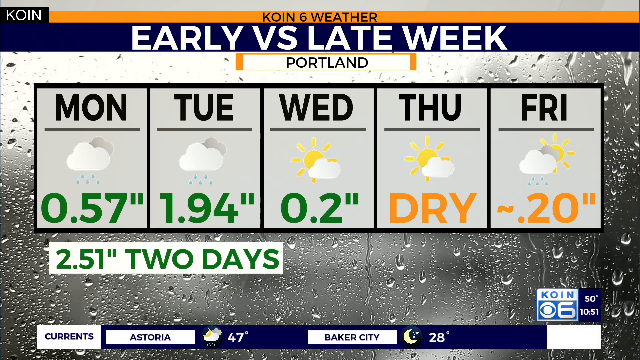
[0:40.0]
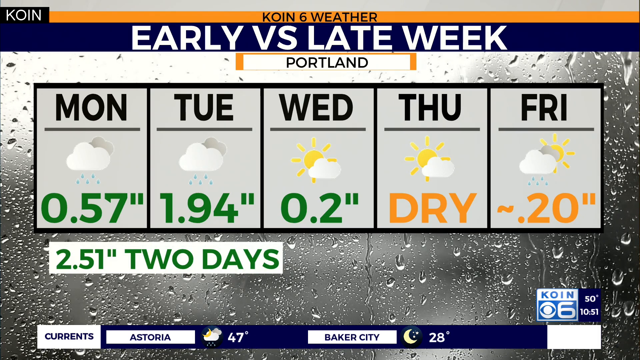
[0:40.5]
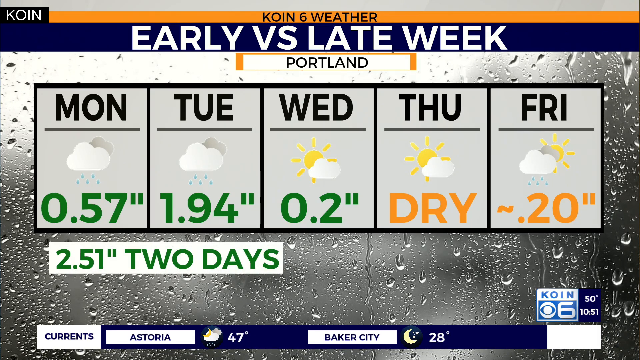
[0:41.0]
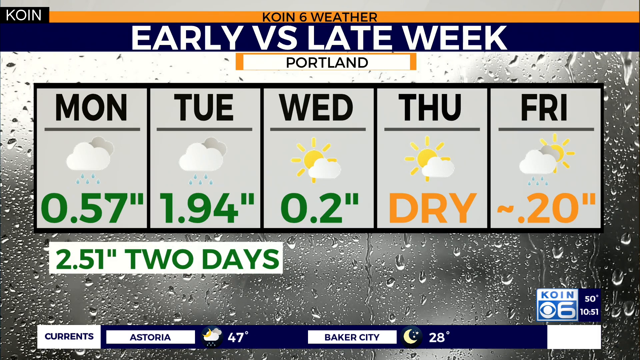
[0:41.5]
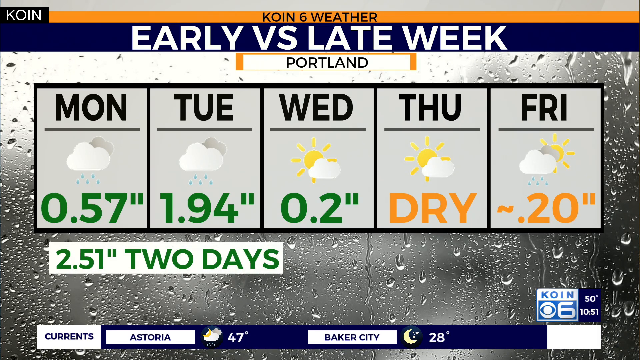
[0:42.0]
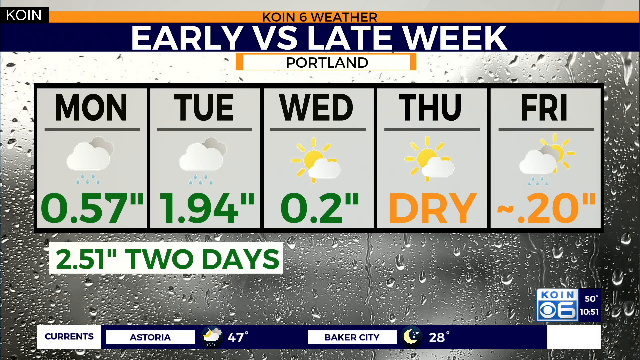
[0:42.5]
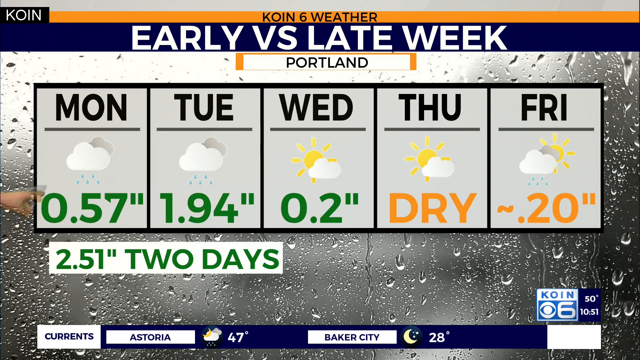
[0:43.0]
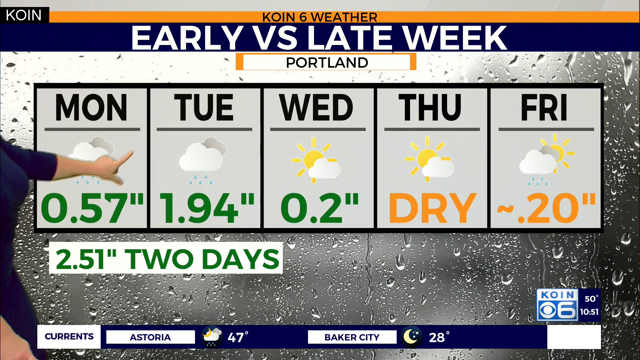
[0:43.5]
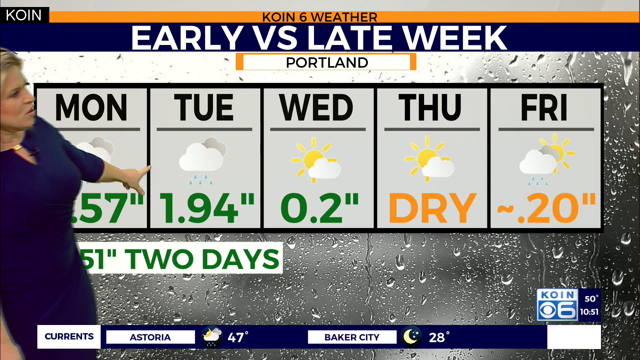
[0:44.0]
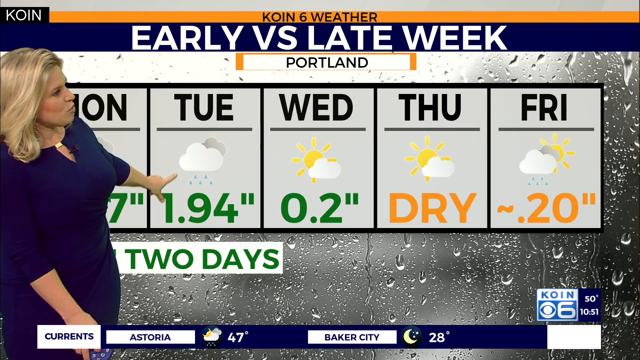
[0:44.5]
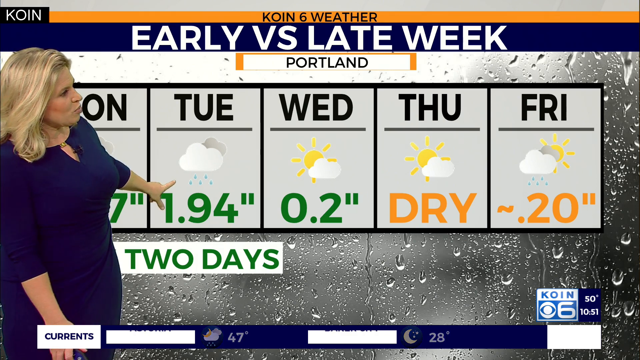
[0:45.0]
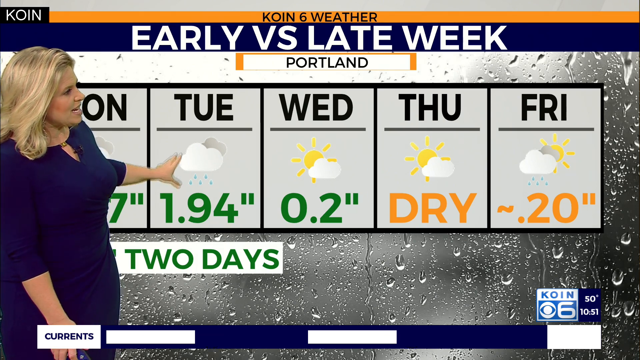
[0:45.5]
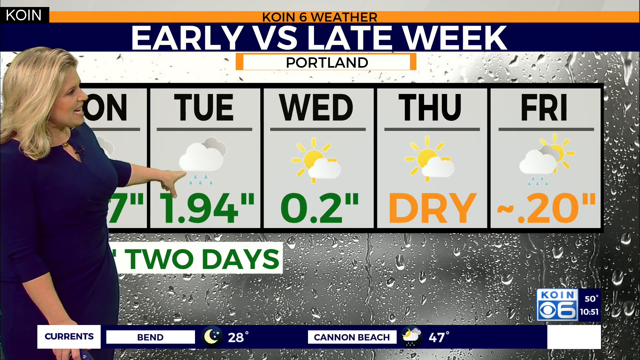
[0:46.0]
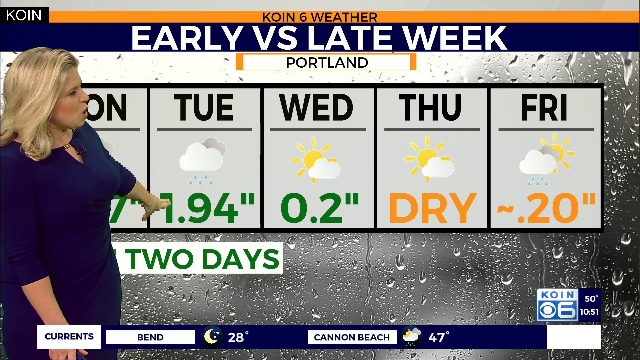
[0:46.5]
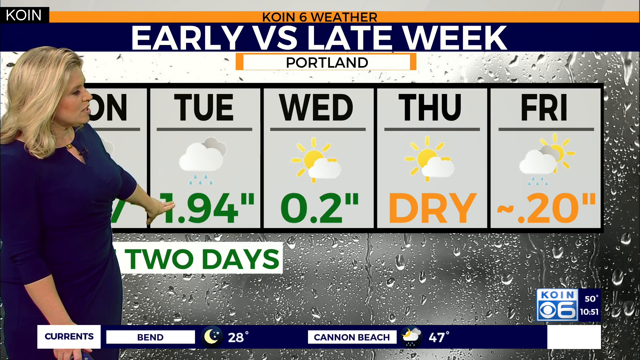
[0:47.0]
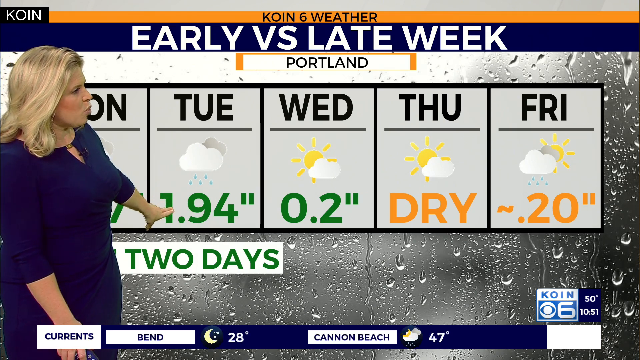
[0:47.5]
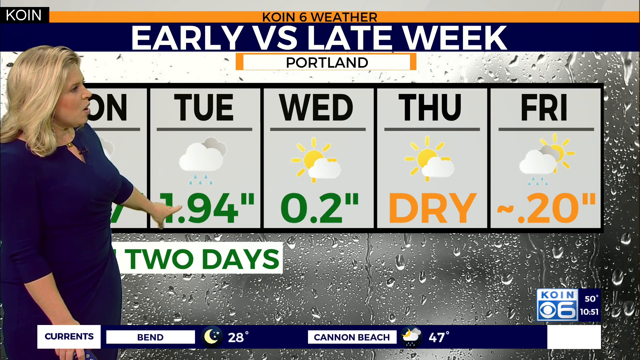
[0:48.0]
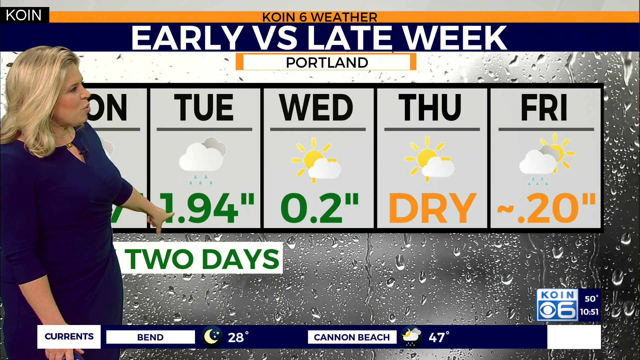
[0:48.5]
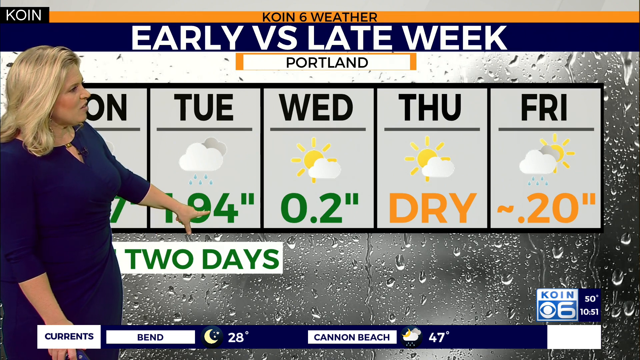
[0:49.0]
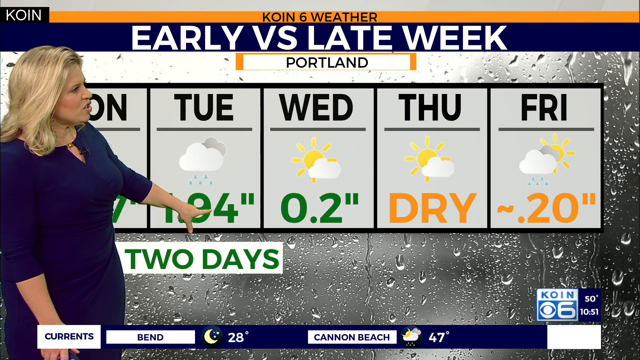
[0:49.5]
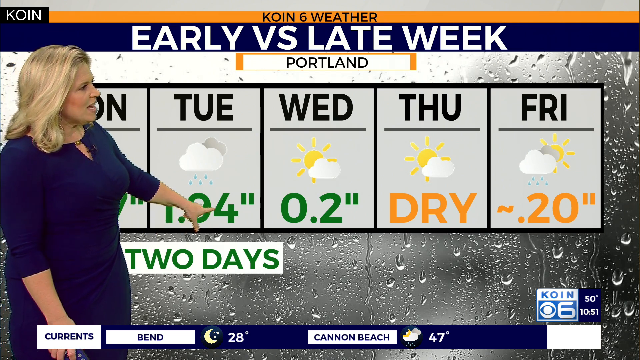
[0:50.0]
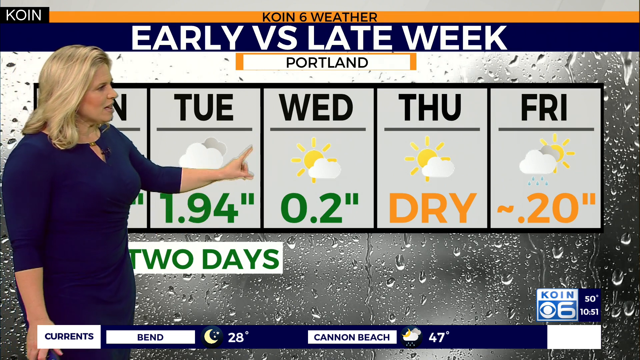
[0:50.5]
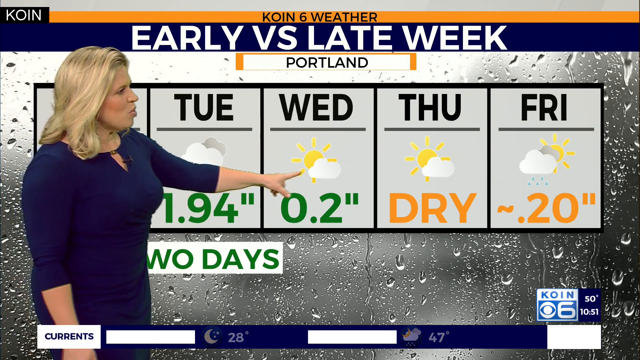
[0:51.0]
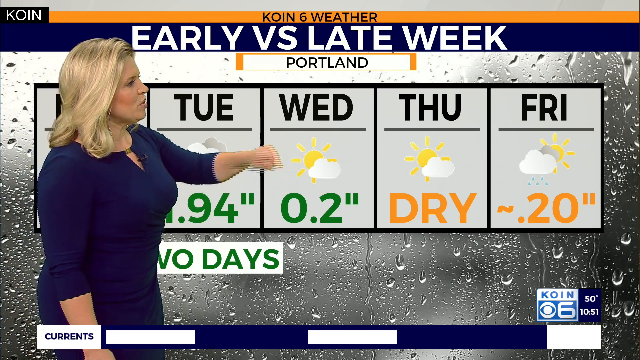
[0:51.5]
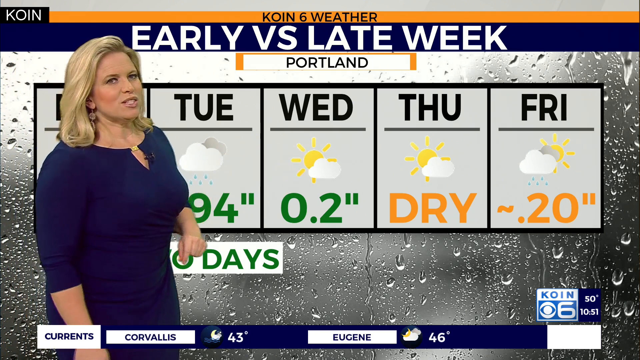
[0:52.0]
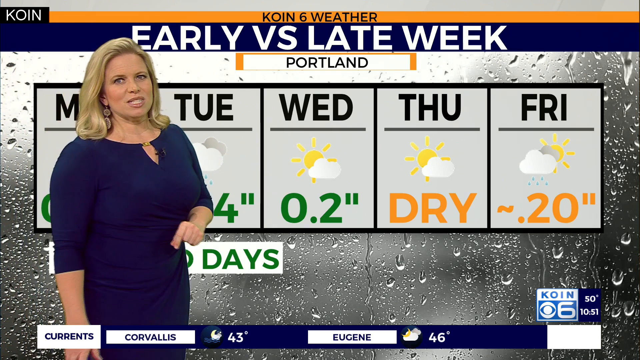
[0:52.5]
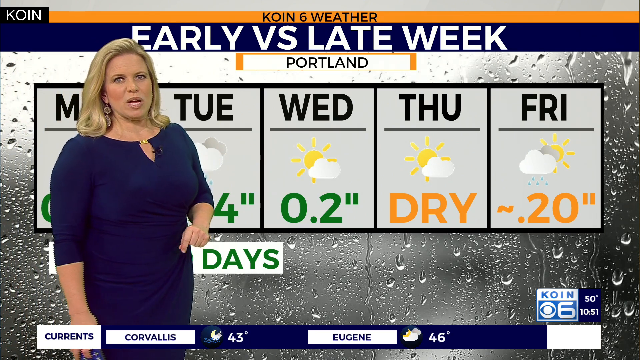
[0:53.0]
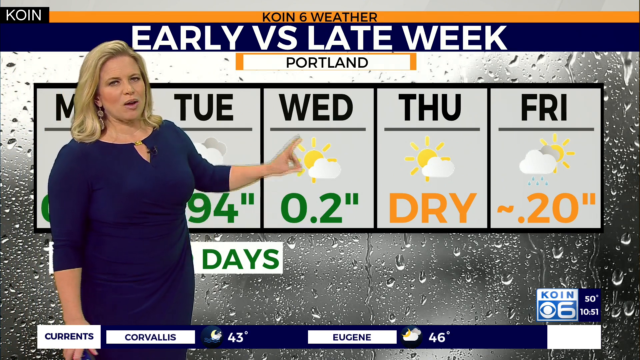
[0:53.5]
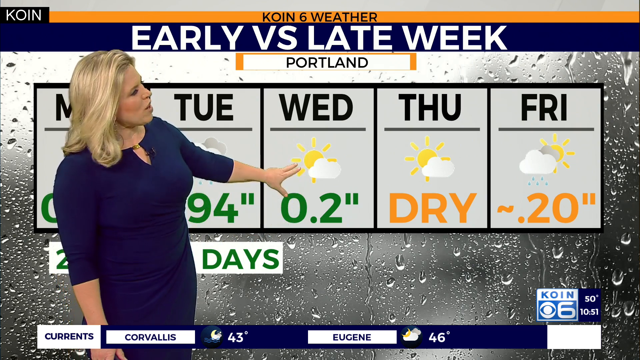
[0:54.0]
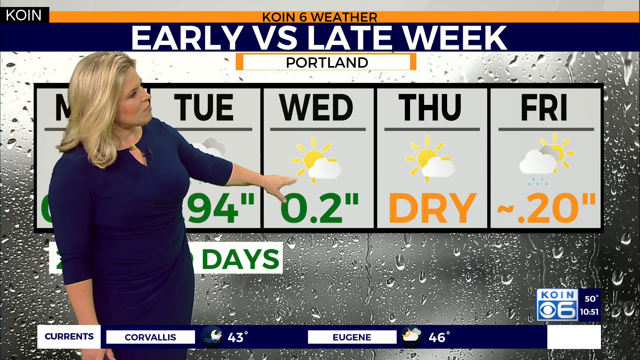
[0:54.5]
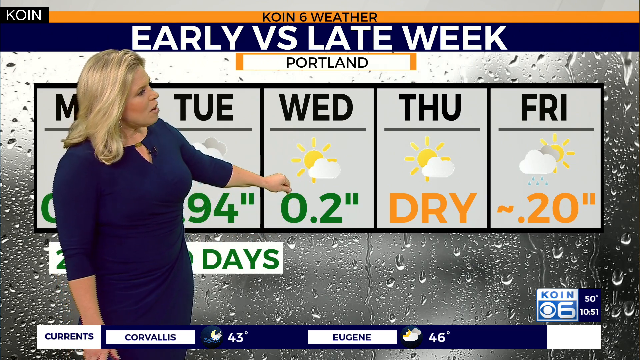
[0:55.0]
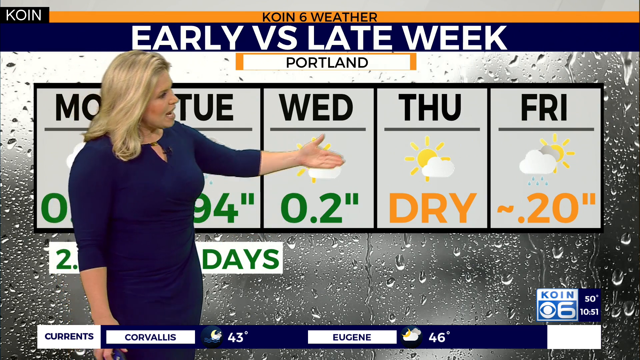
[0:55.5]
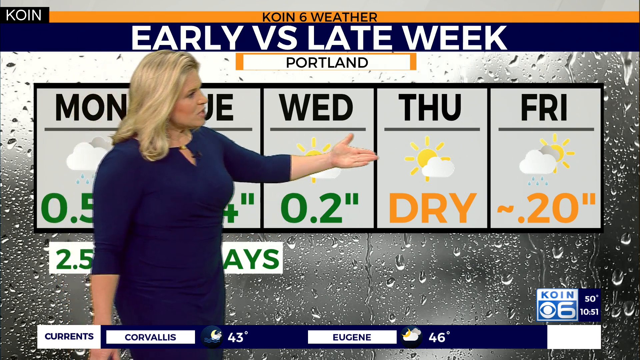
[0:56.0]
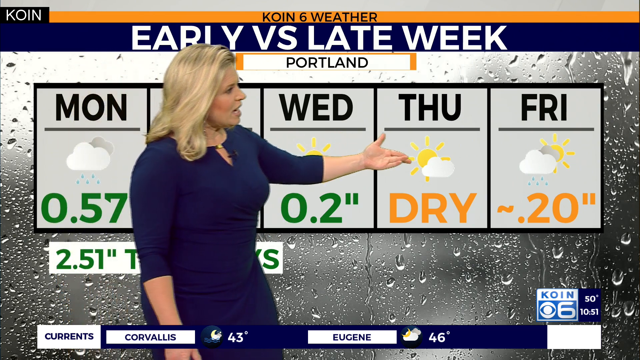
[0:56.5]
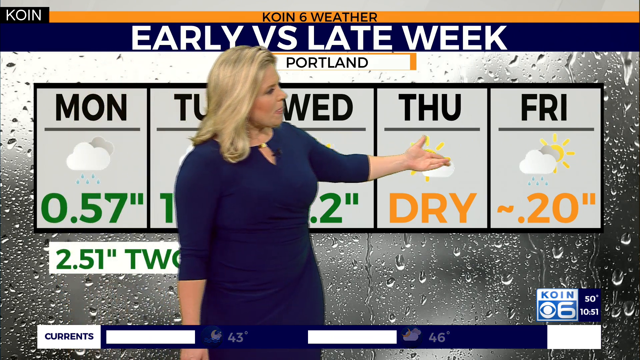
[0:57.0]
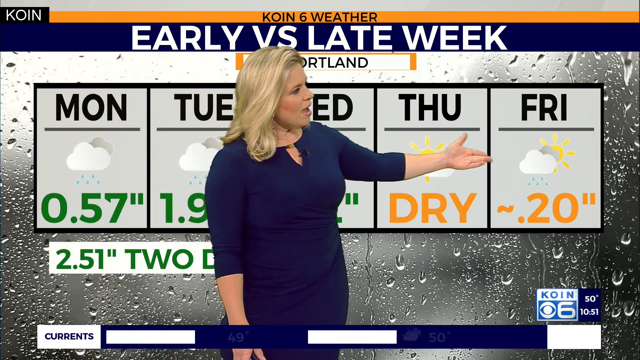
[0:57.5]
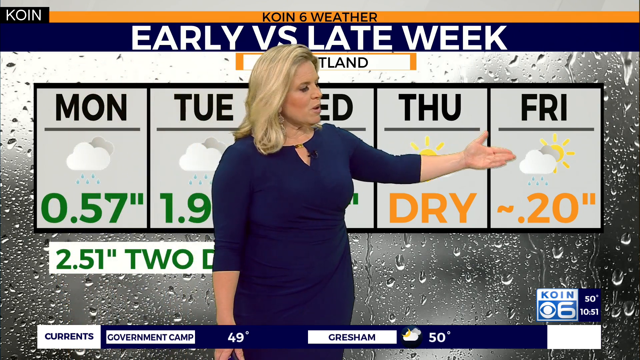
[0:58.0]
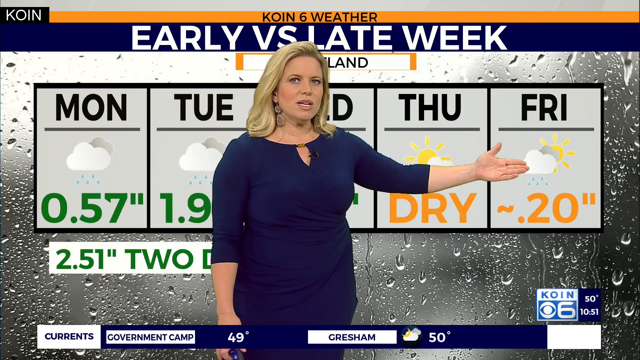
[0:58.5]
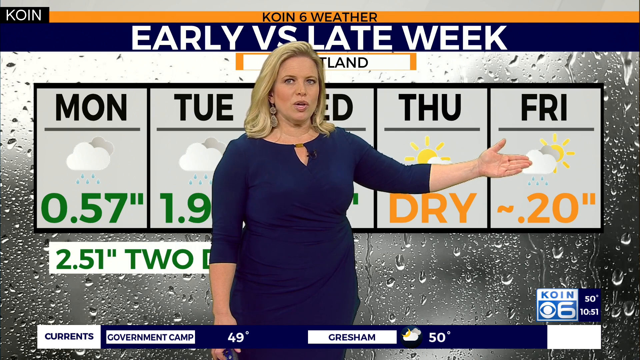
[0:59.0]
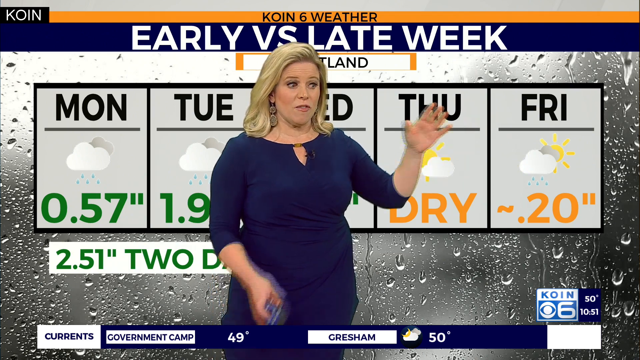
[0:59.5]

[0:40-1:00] More forecast information for the area is displayed, and she points to different information on the screen for the coming days.